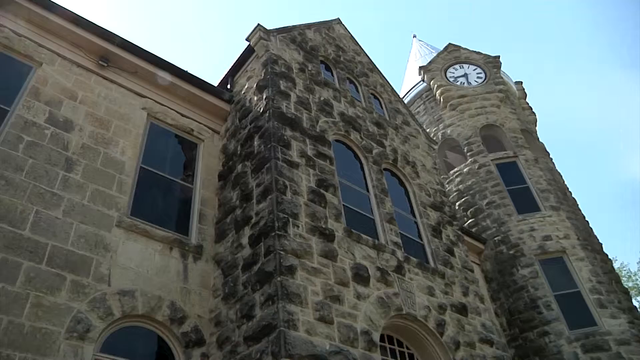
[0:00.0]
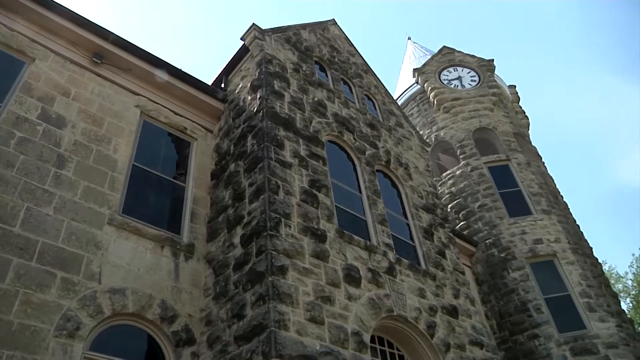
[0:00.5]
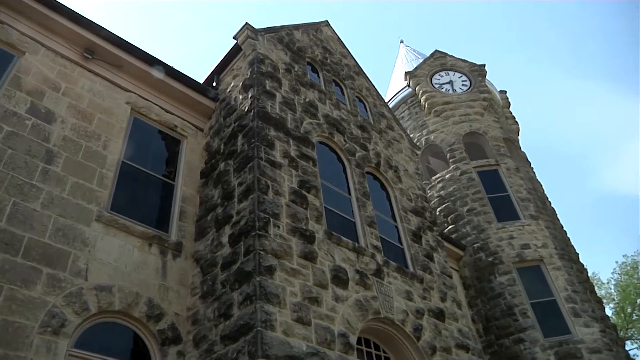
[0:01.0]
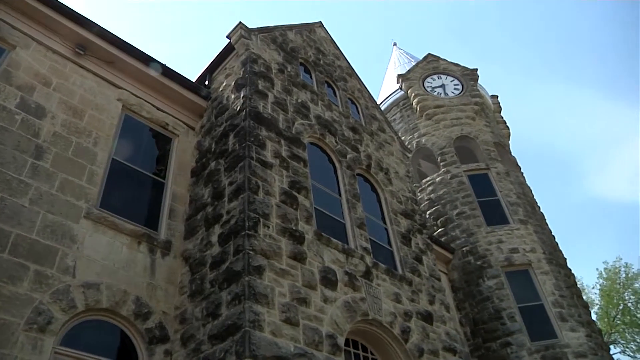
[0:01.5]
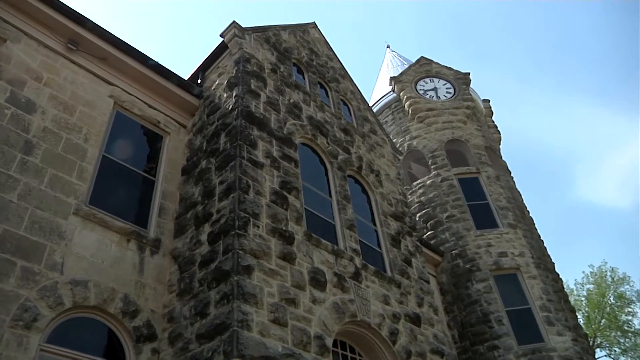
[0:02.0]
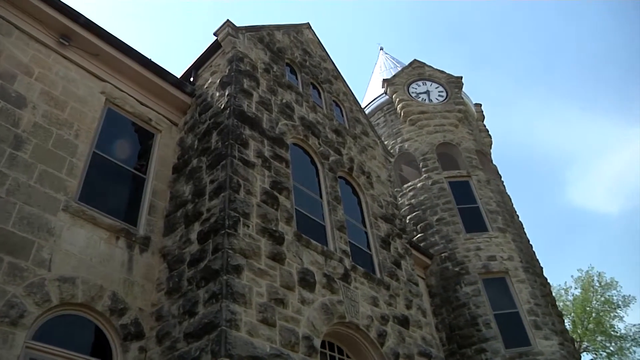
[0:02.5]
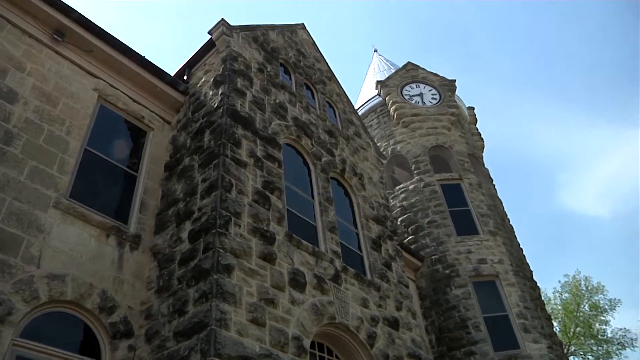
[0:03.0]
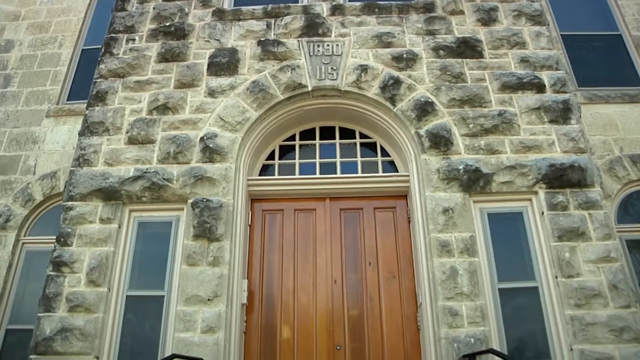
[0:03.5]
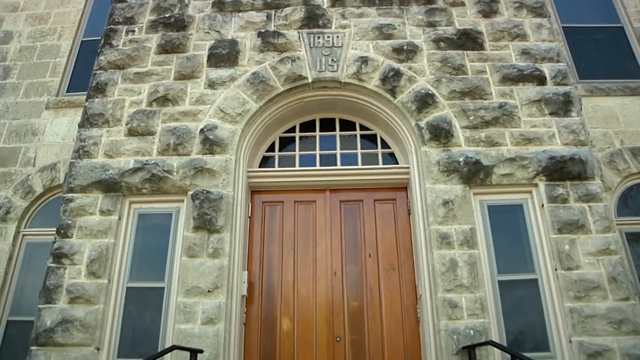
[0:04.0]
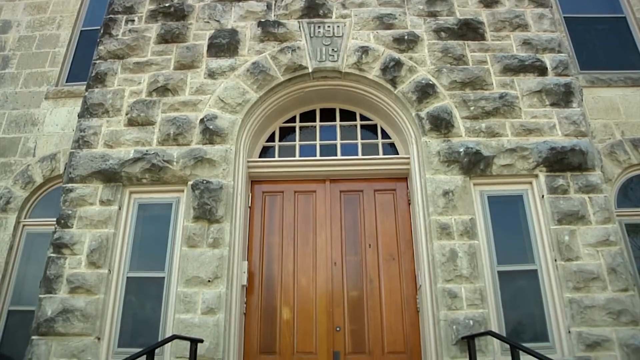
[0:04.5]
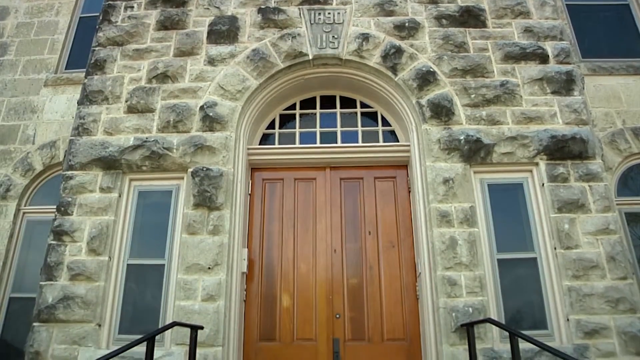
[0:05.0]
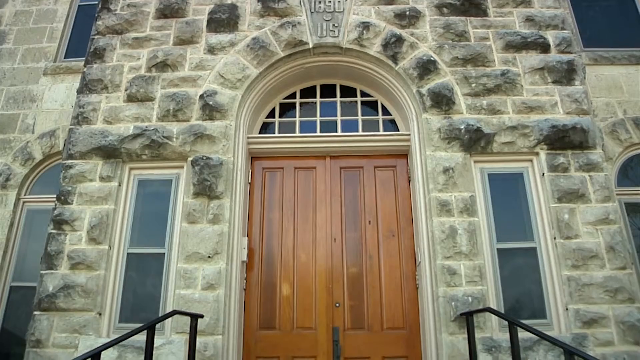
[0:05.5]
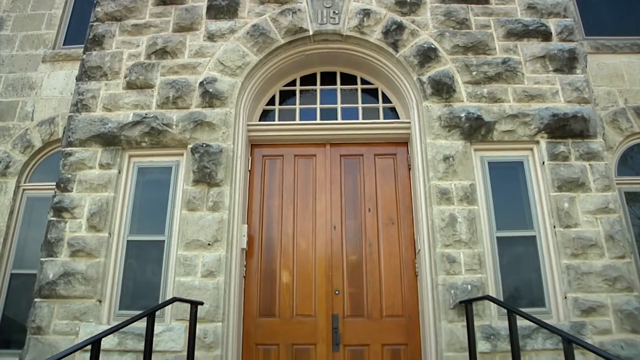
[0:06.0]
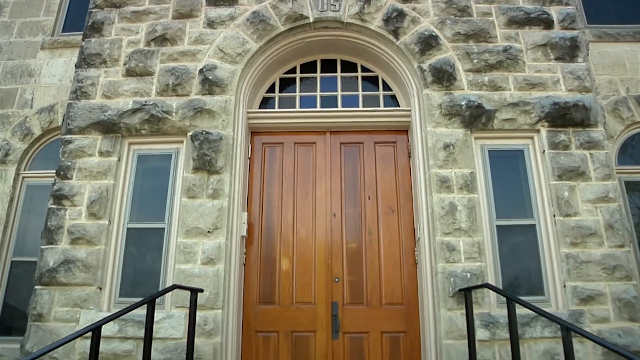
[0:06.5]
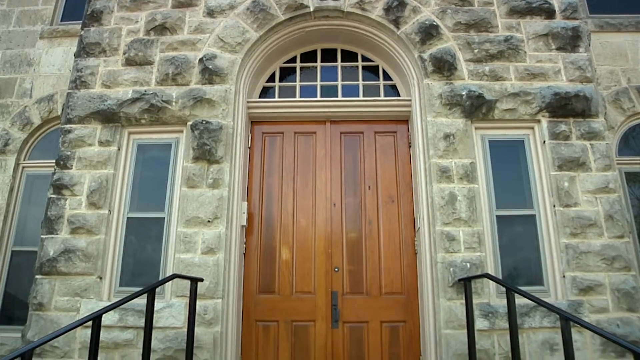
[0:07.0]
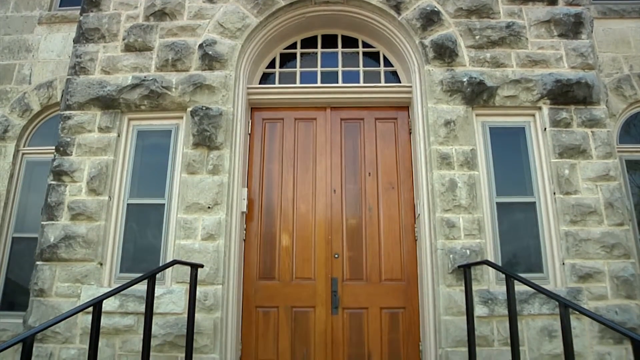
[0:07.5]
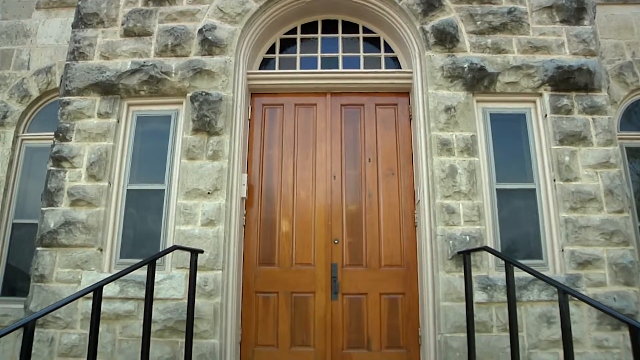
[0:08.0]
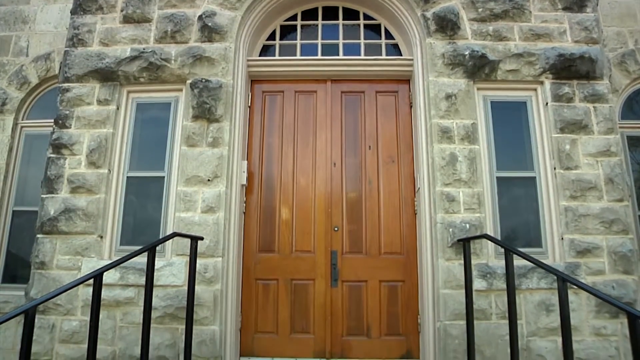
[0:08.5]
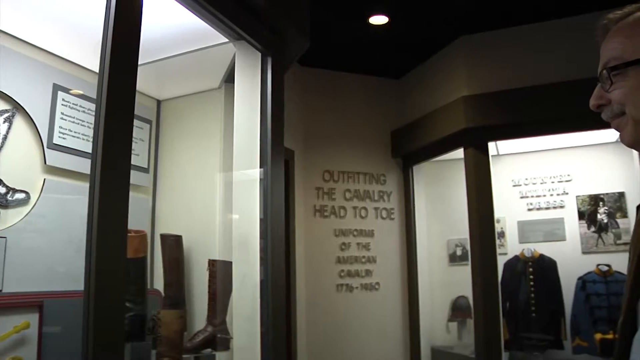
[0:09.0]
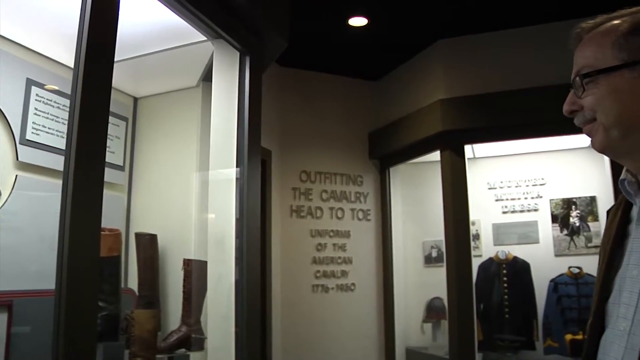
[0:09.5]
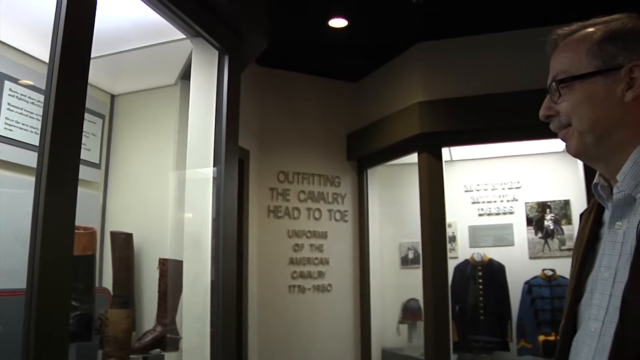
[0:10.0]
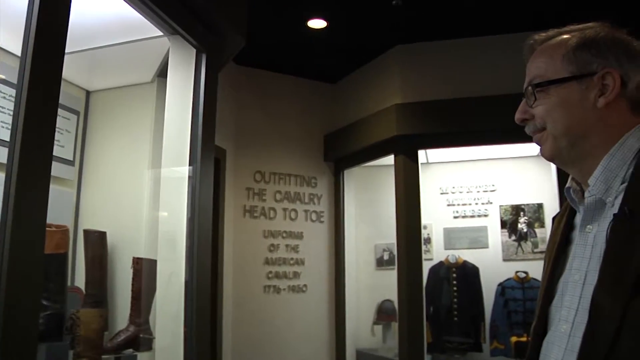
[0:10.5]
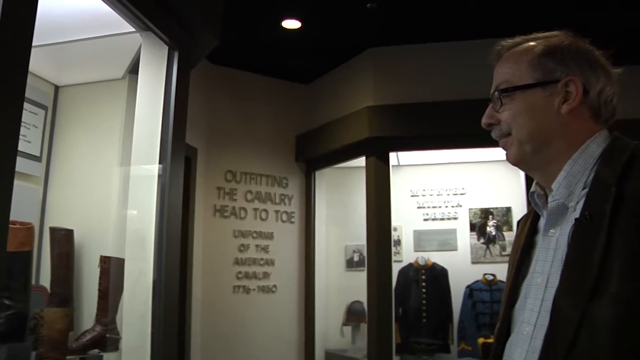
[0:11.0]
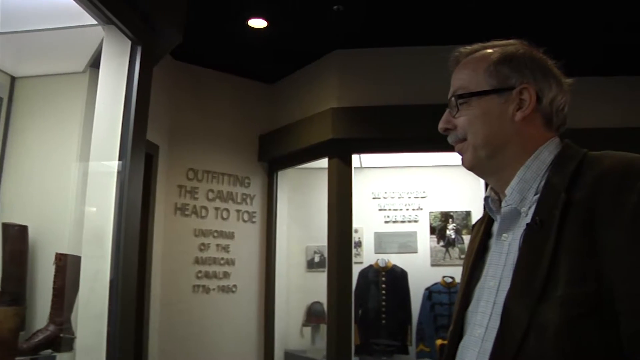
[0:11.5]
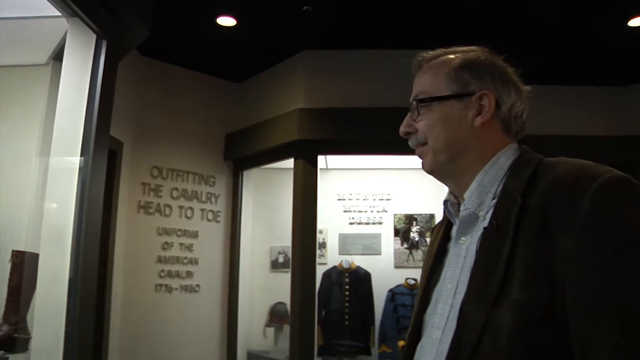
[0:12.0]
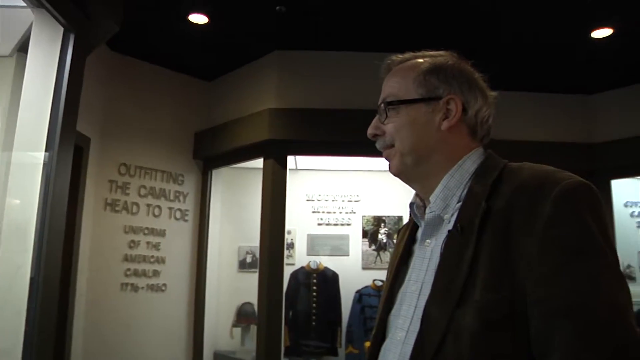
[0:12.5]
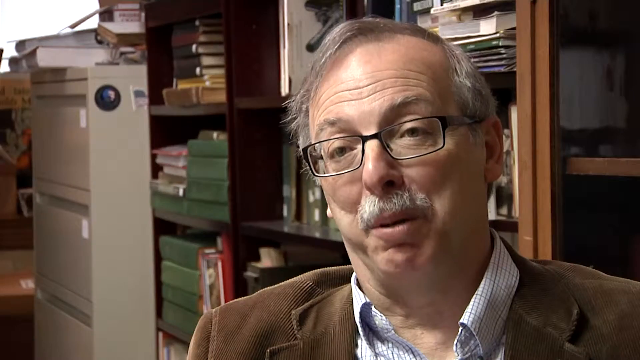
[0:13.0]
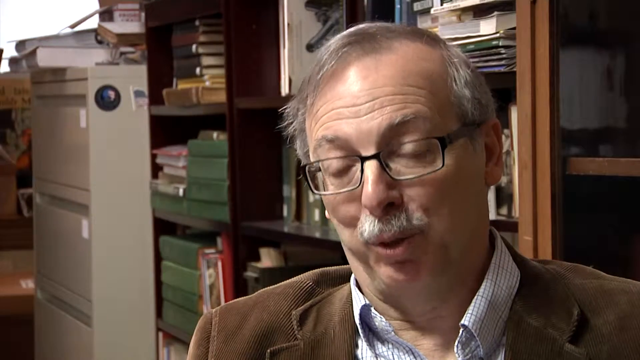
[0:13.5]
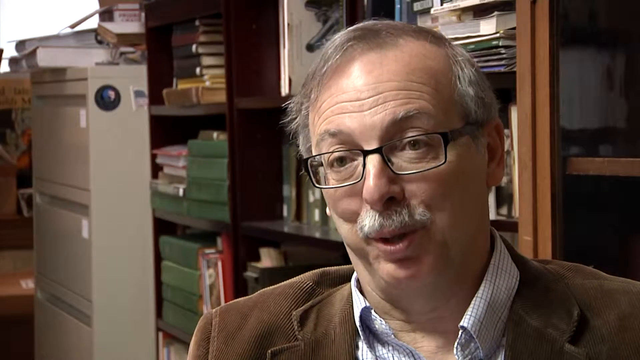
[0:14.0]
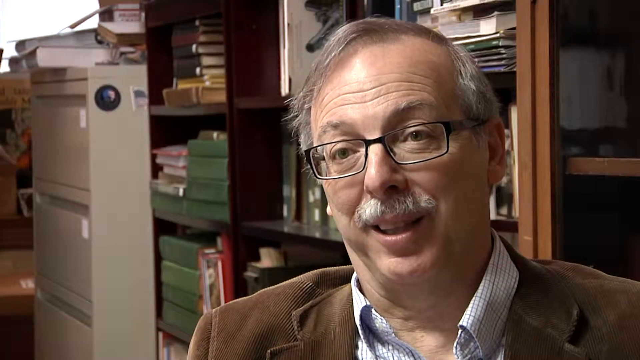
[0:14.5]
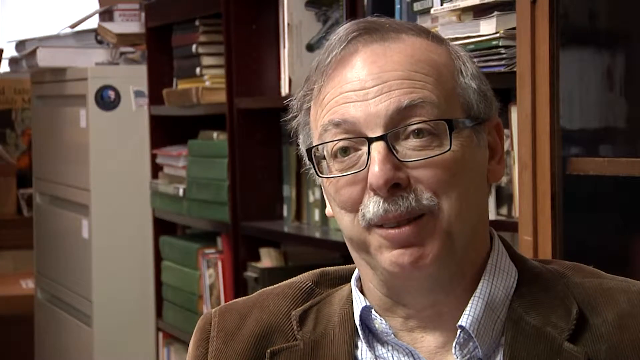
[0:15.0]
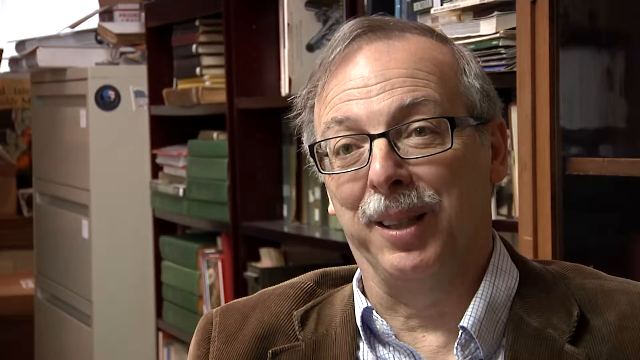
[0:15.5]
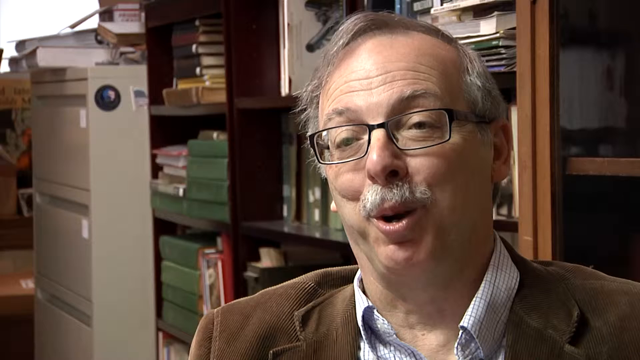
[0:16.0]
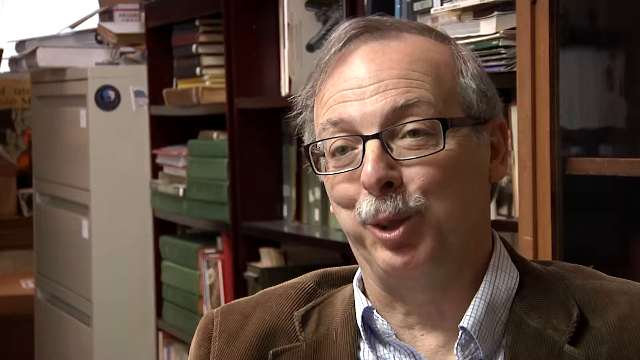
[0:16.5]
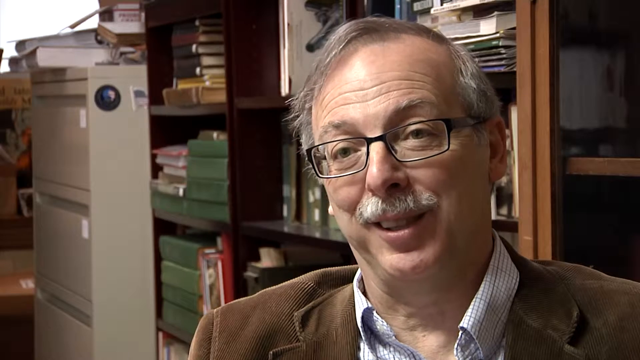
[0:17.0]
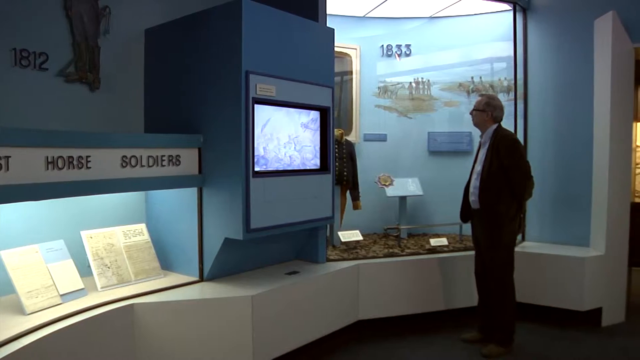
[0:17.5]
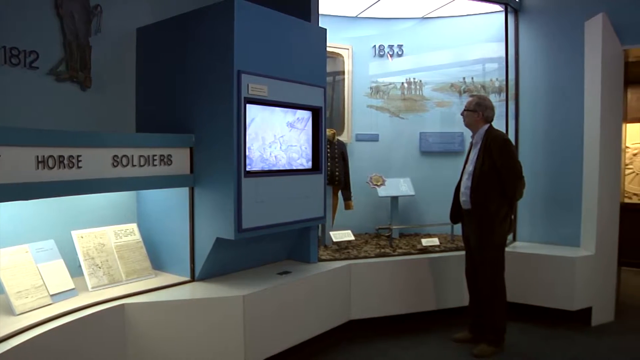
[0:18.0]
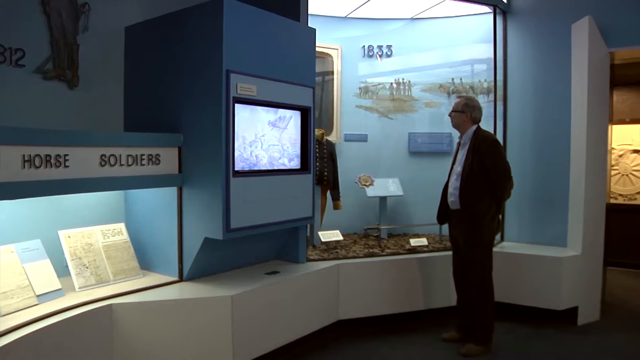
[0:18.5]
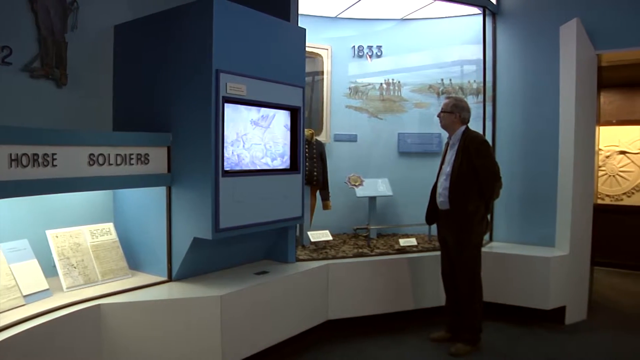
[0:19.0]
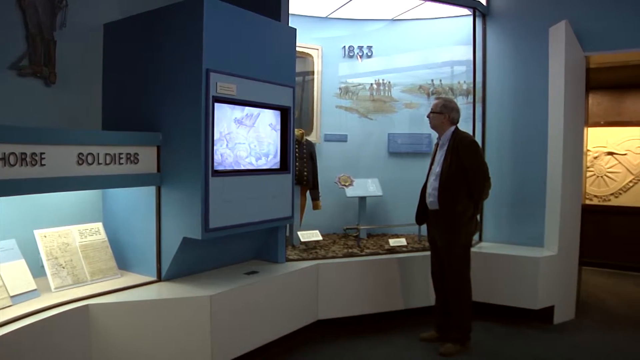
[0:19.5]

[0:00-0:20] In color, the video opens at the base of a very old building, like a church or some sort of city building, with a conical top. Above the door it reads "1890" and, apparently, "U.S." On-screen text reads "Outfitting the Cavalry Head to Toe" and "Uniforms of the American Cavalry," followed by some dates. A man in a corduroy jacket is talking, apparently inside a museum. He wears very rectangular-looking glasses with black frames and a dress shirt with no tie. Inside the museum there is an area showing horses and soldiers. The museum is made of stone on the outside, and it looks as if it was added to at some point, since there is another building with a different kind of gray stone.